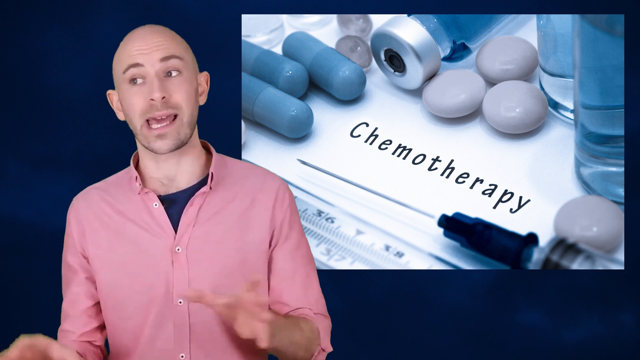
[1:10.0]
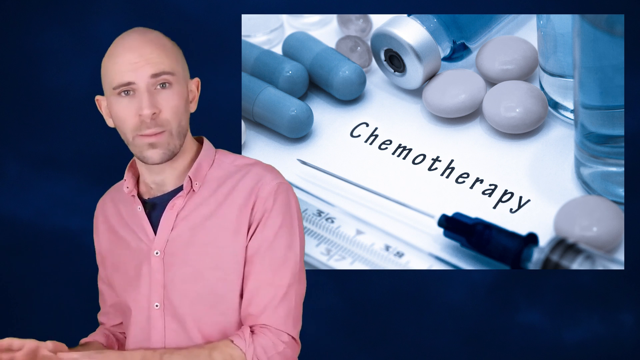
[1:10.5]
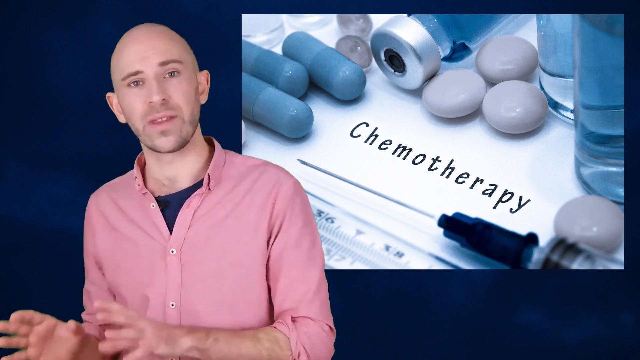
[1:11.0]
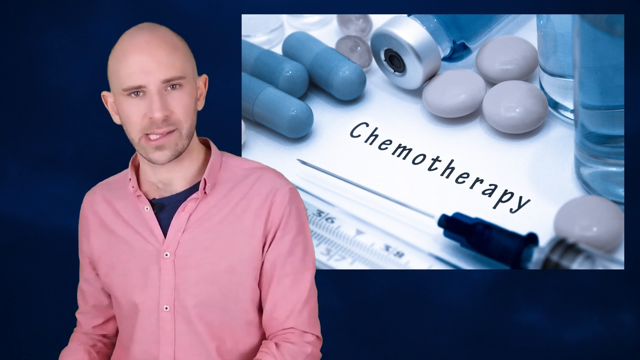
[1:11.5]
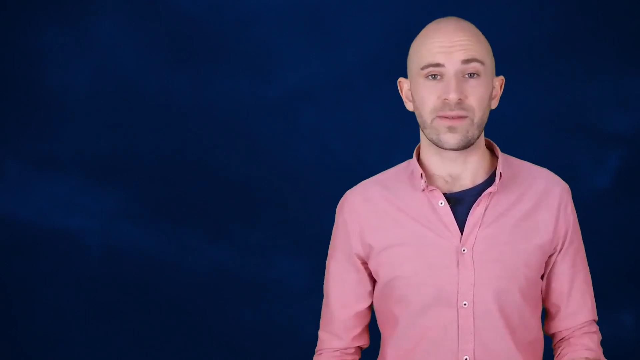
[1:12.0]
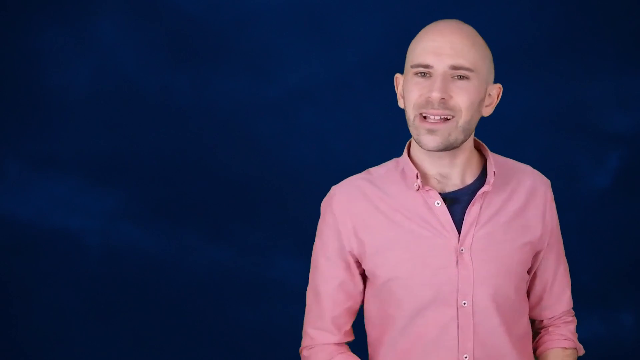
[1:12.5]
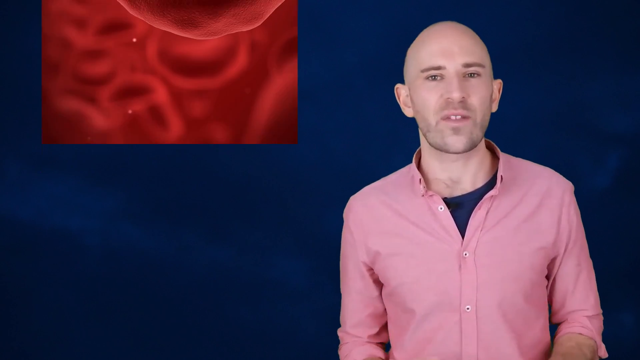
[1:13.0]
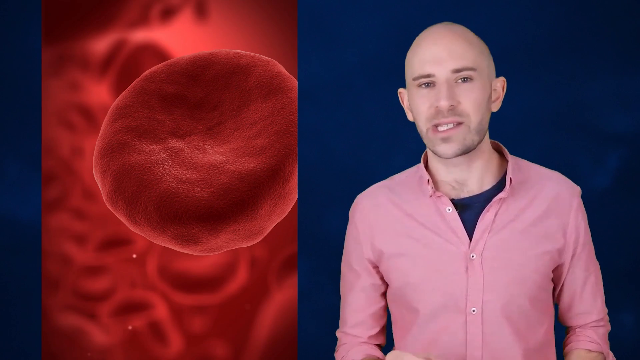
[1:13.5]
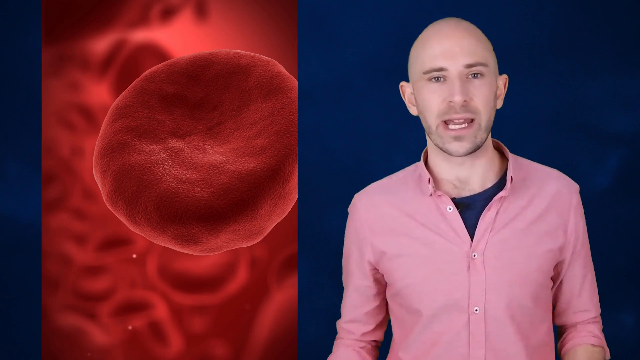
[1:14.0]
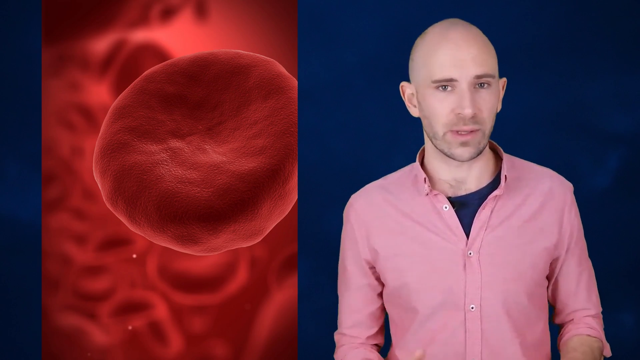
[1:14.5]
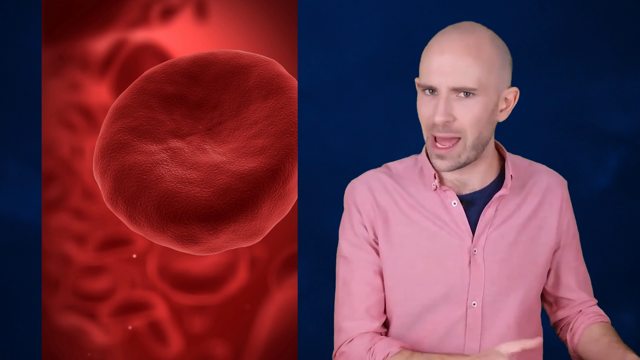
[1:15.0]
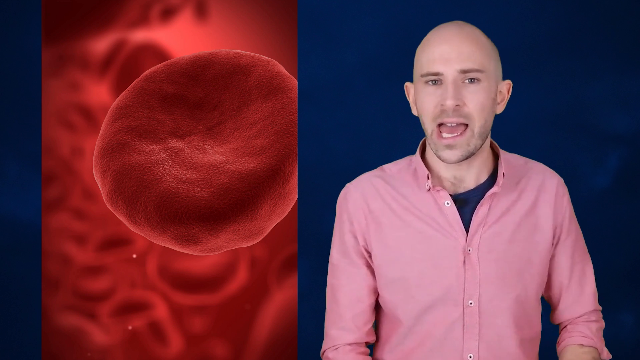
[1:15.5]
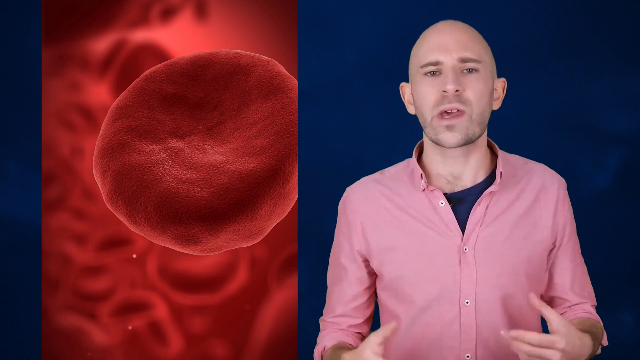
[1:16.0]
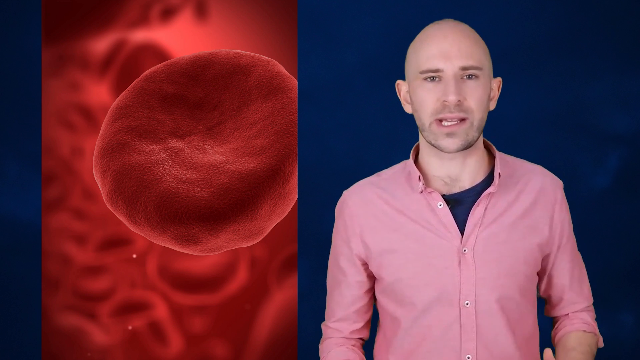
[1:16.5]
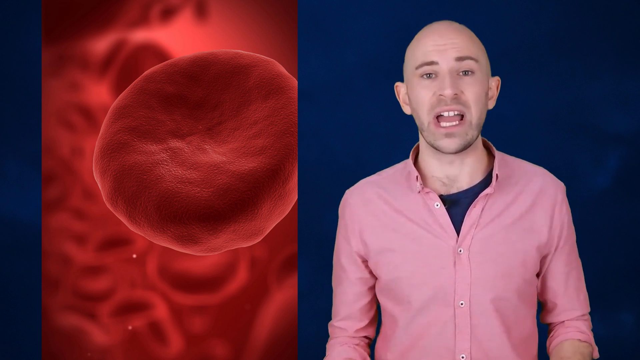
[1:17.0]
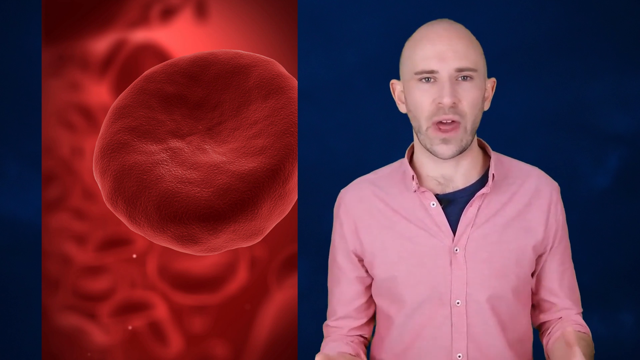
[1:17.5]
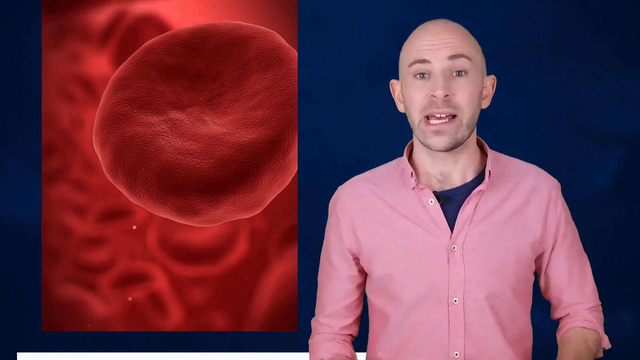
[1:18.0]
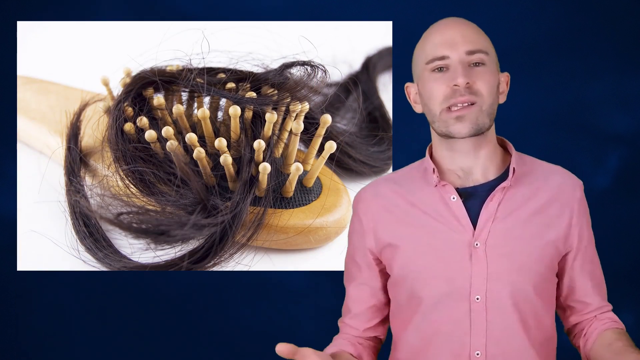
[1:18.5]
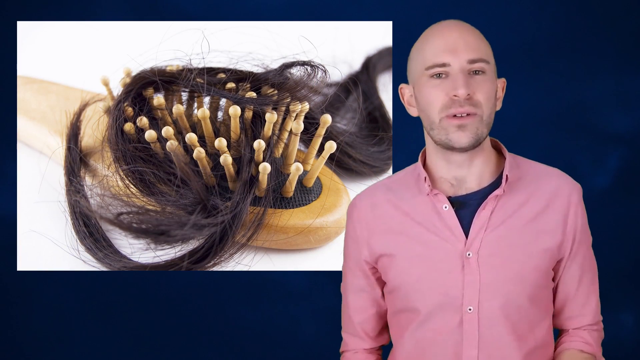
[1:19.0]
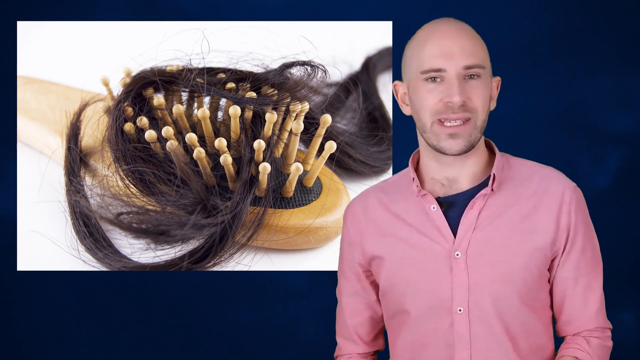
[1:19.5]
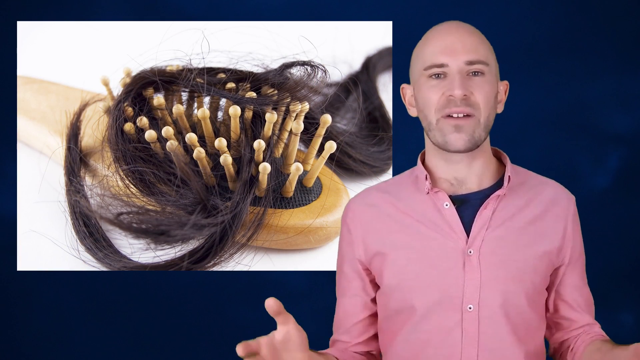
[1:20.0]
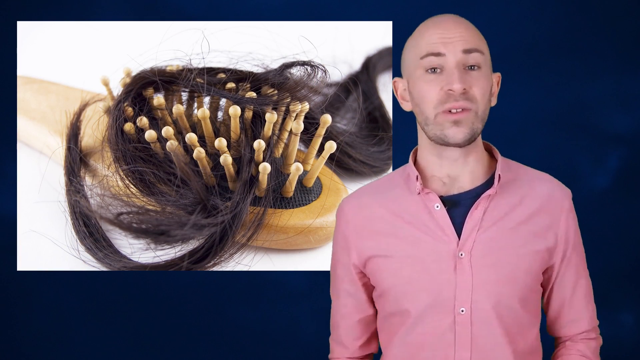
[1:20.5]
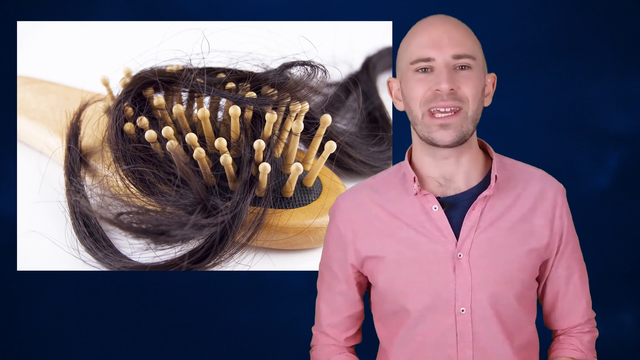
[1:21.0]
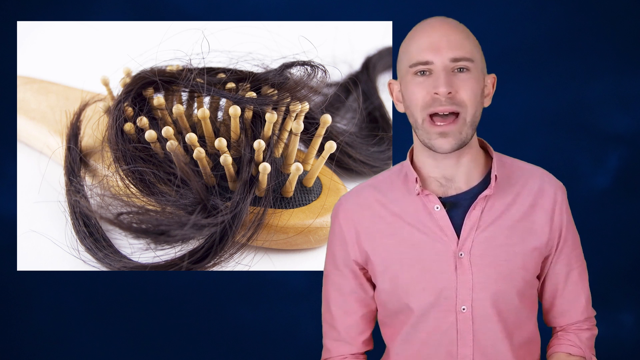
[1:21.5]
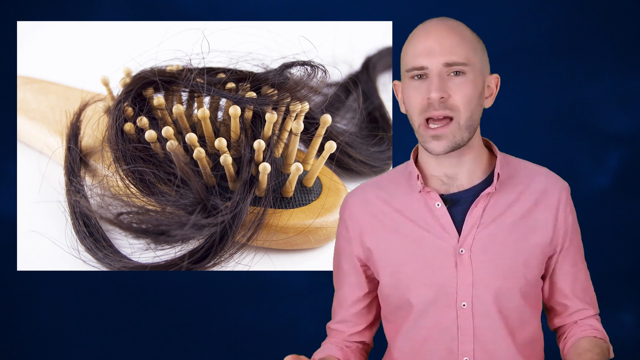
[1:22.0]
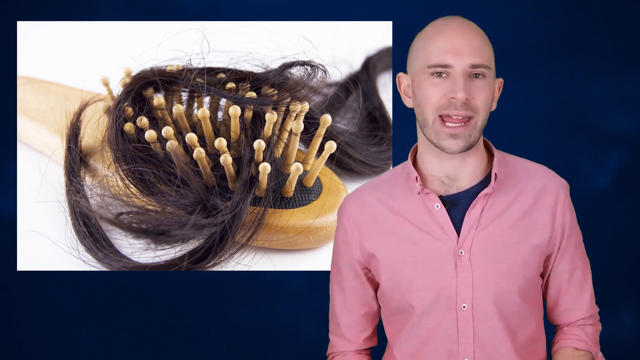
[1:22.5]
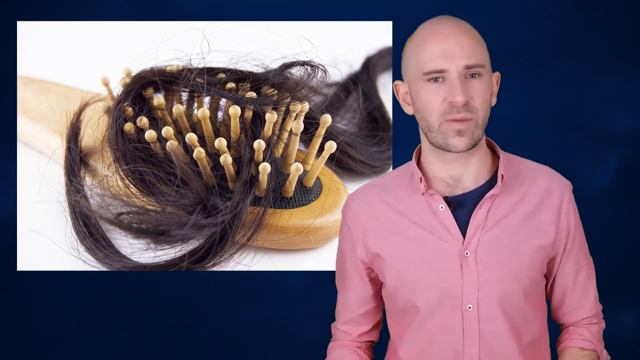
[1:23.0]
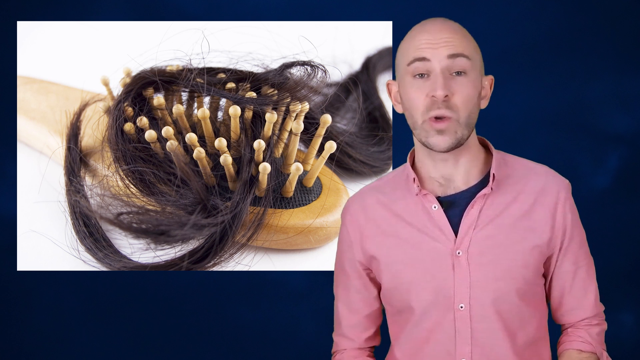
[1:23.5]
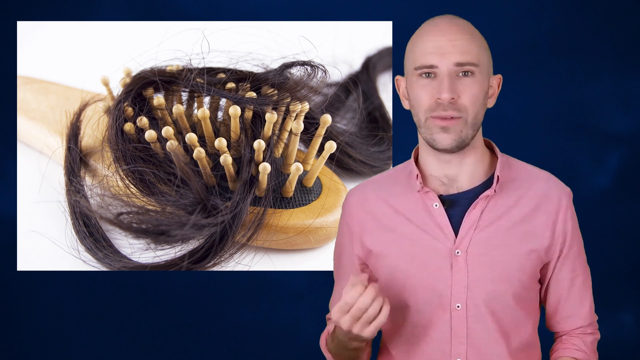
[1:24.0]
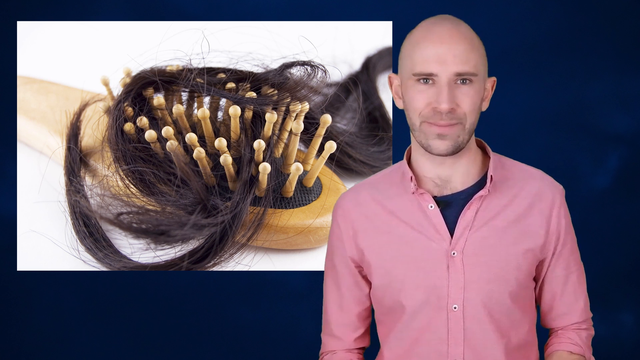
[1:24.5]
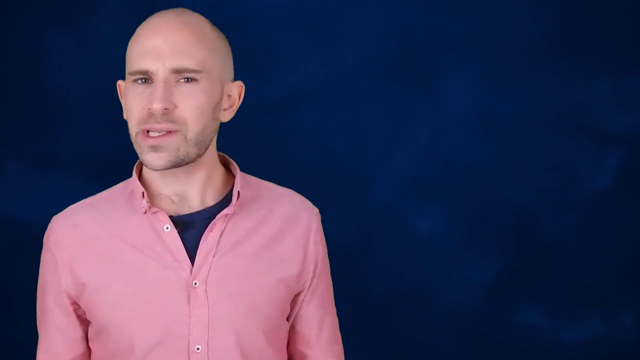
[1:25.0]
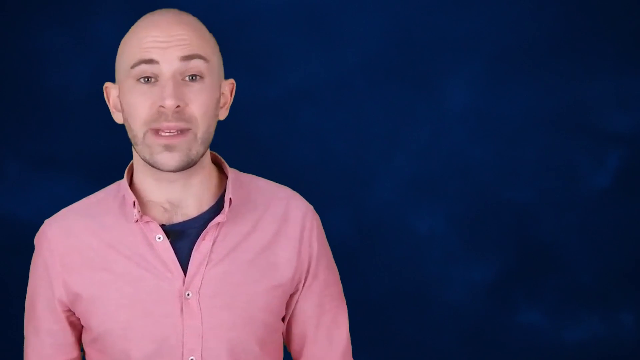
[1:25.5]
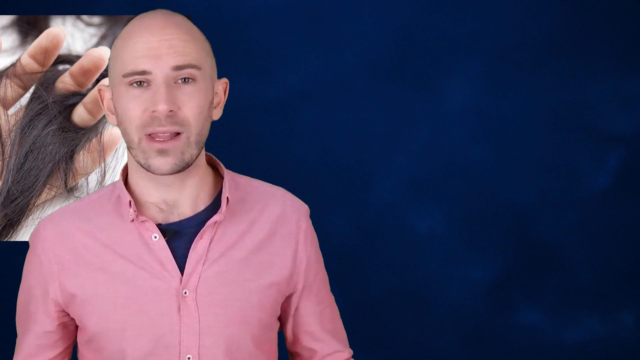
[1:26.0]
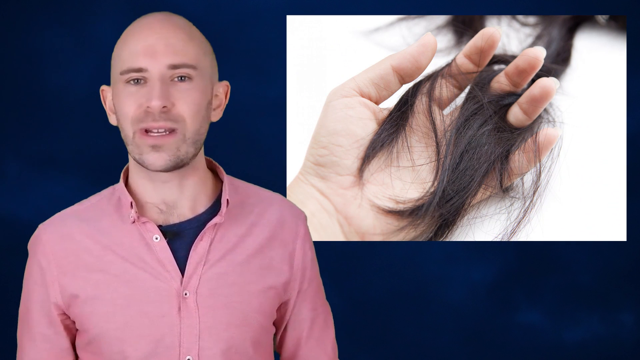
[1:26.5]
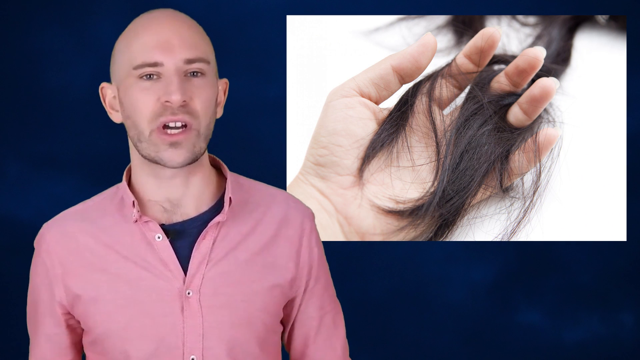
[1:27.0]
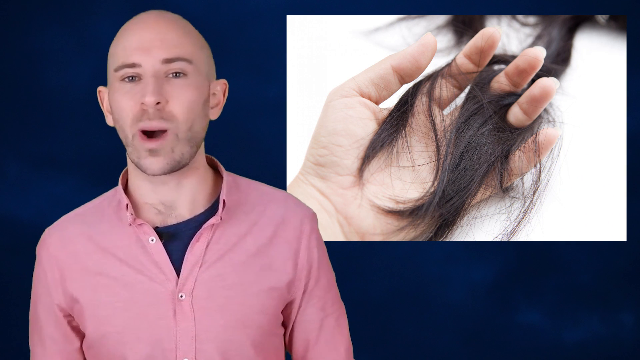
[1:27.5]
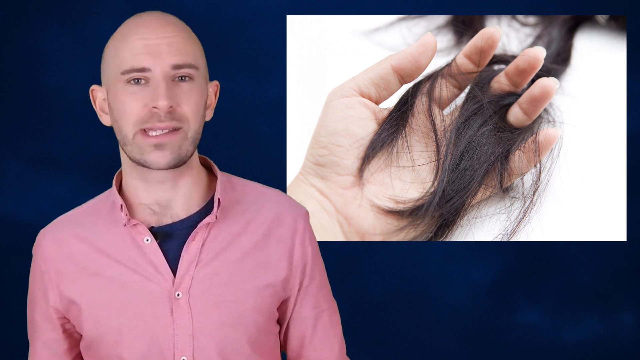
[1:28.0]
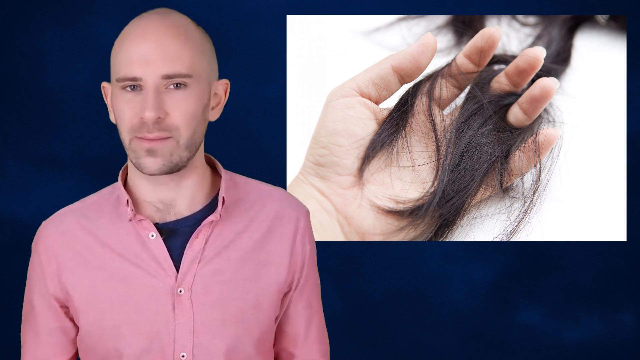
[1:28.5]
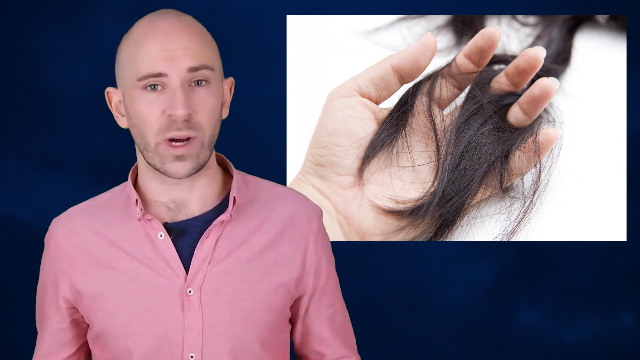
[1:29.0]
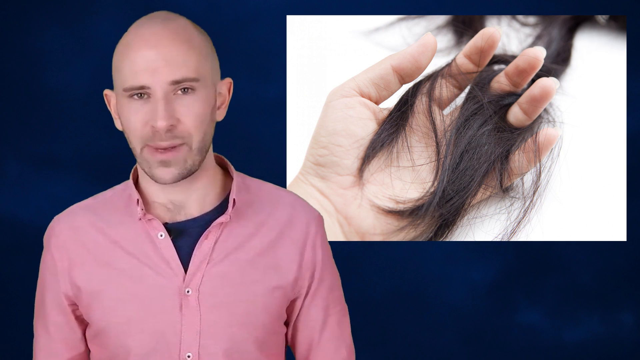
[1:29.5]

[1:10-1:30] The bald-headed man, wearing a pink shirt with a black t-shirt underneath, stands and talks in front of a blue background. To the right is an image of blue pills and white pills, a medicine bottle lying on its body, a syringe and needle, a ruler, and the word "chemotherapy" written in black ink. The video then shows, to the left of the man, an image of a single red blood cell, red in color. Next comes an image of a comb with dark human hair on it, followed by an image on the right of a hand holding a chunk of human hair.